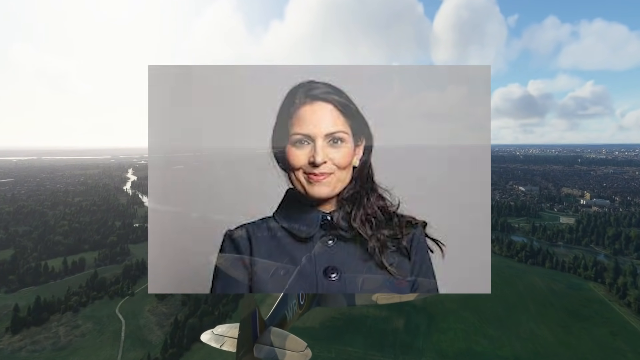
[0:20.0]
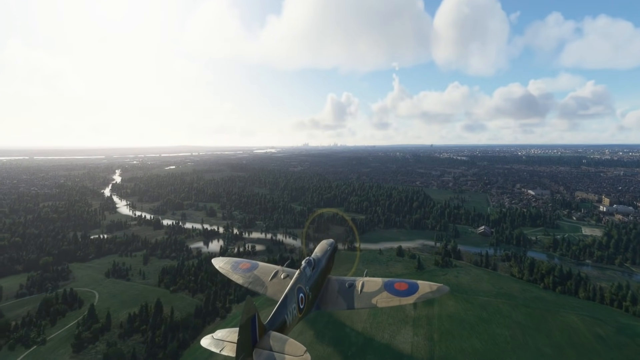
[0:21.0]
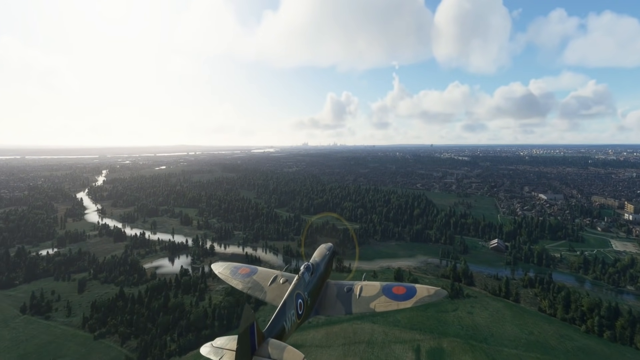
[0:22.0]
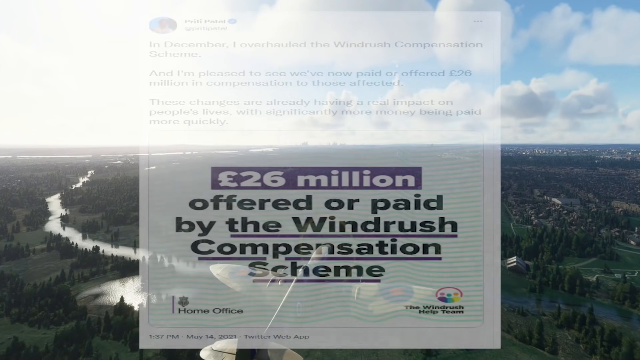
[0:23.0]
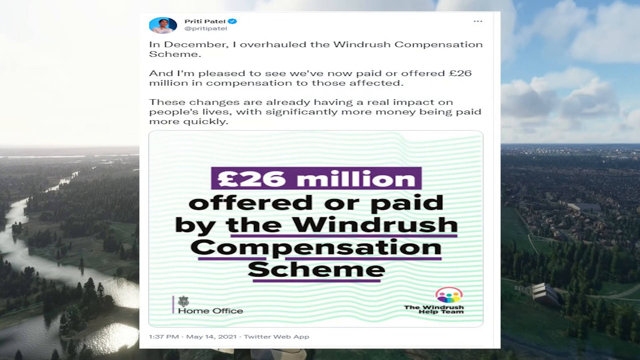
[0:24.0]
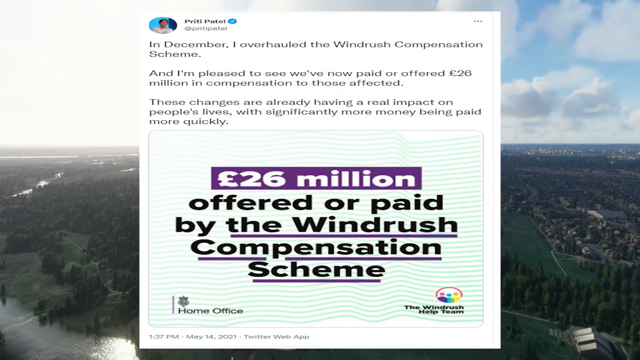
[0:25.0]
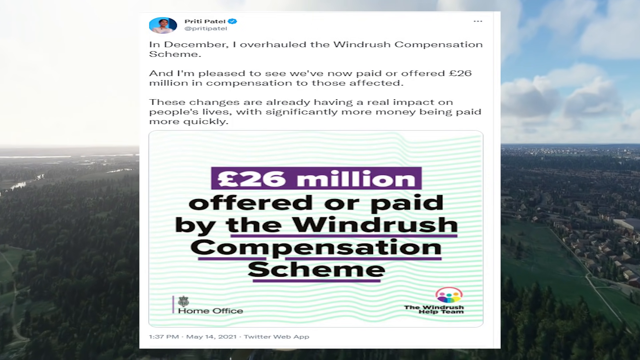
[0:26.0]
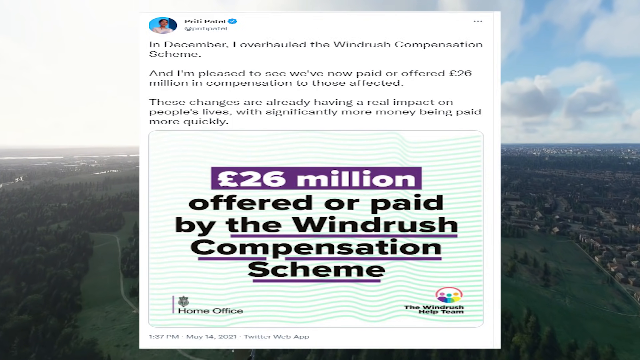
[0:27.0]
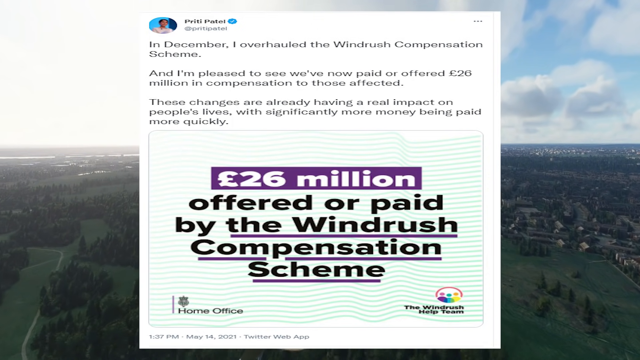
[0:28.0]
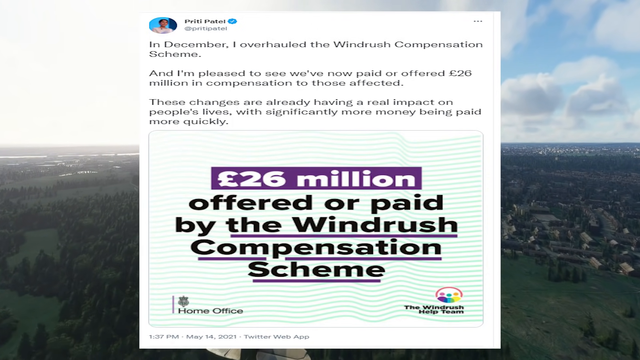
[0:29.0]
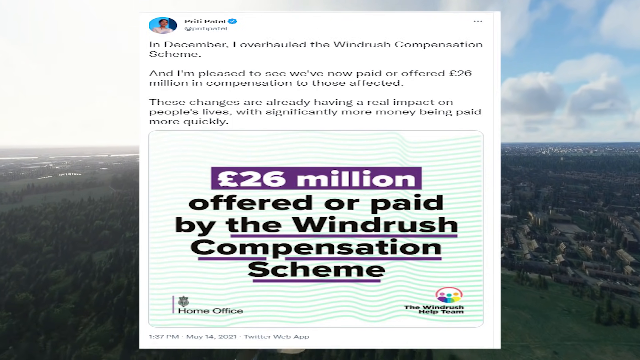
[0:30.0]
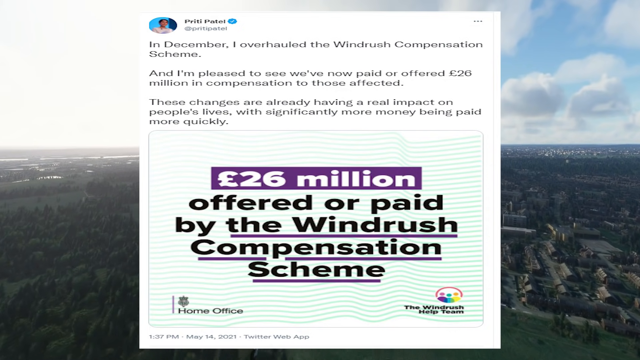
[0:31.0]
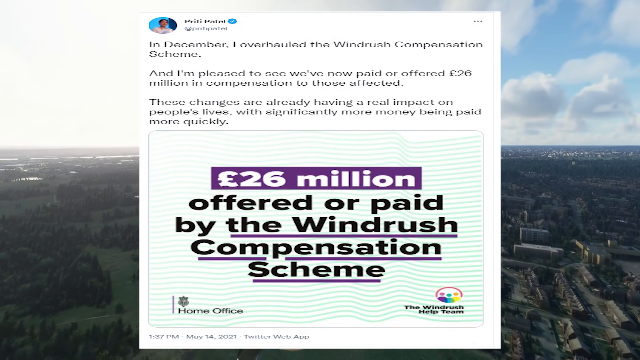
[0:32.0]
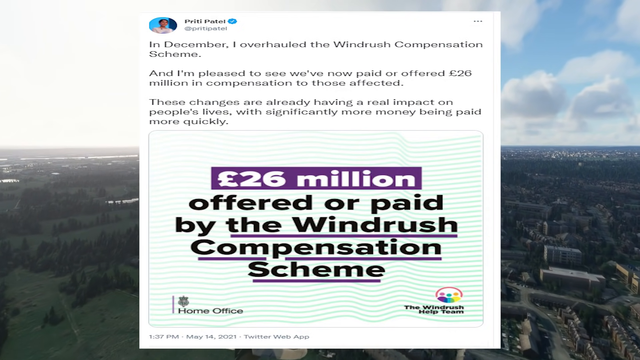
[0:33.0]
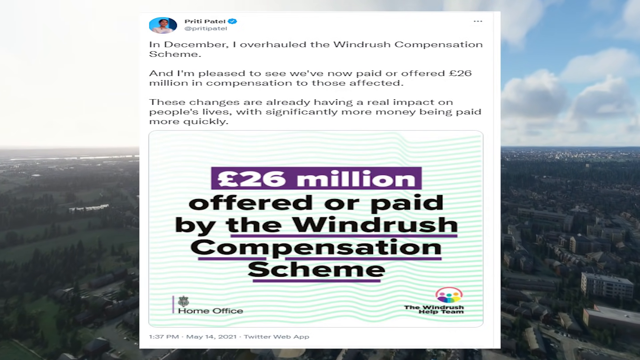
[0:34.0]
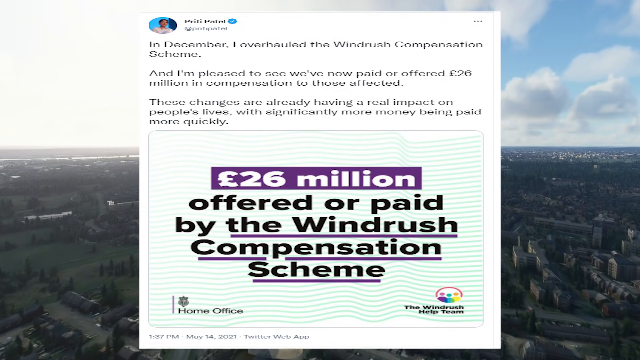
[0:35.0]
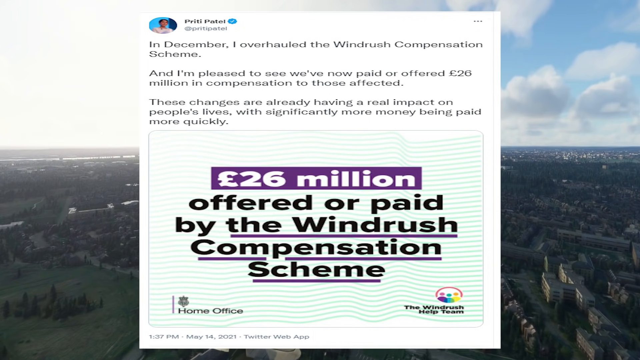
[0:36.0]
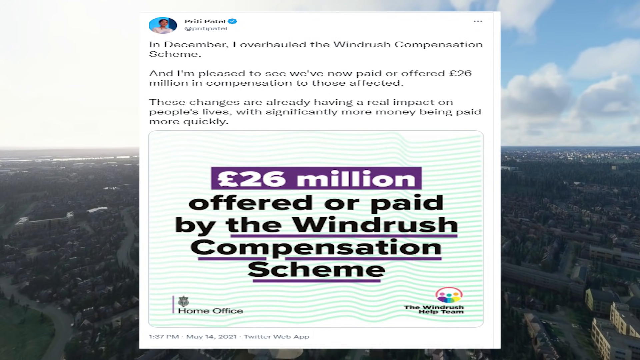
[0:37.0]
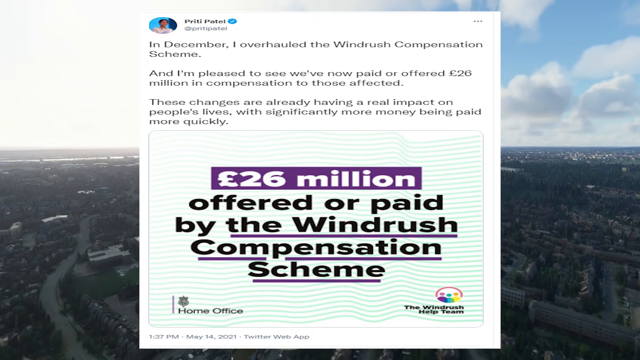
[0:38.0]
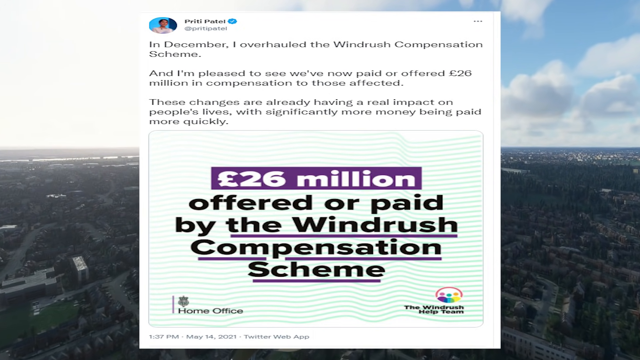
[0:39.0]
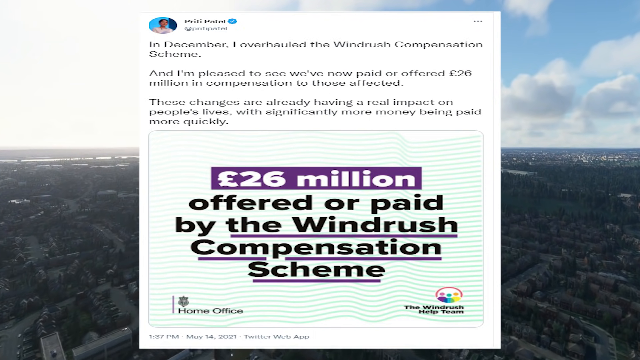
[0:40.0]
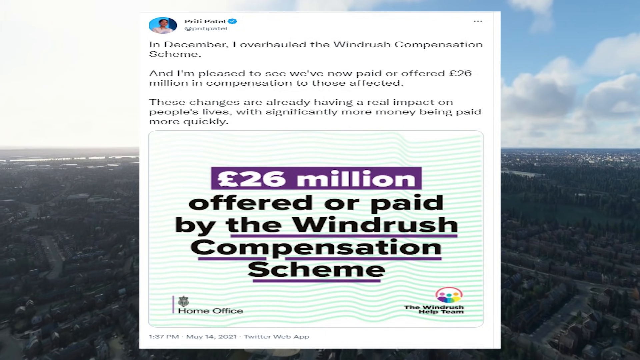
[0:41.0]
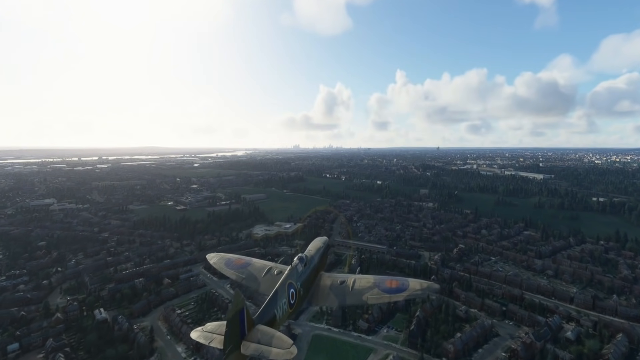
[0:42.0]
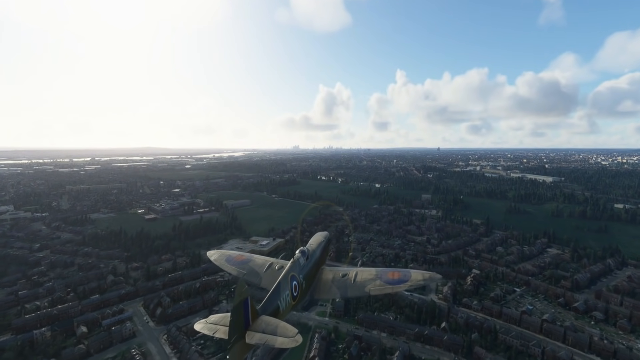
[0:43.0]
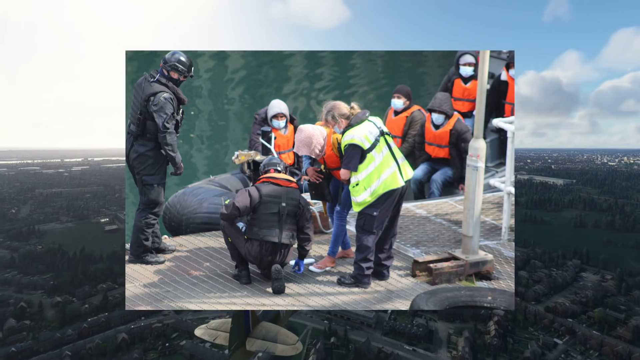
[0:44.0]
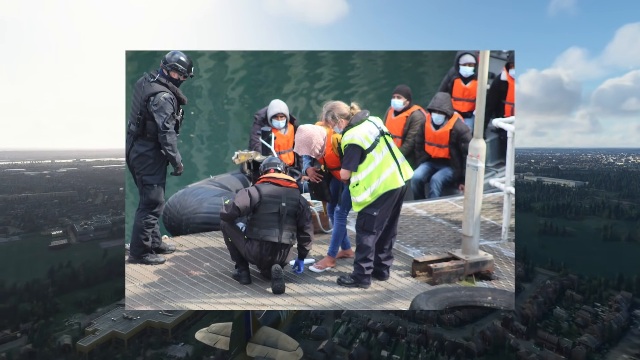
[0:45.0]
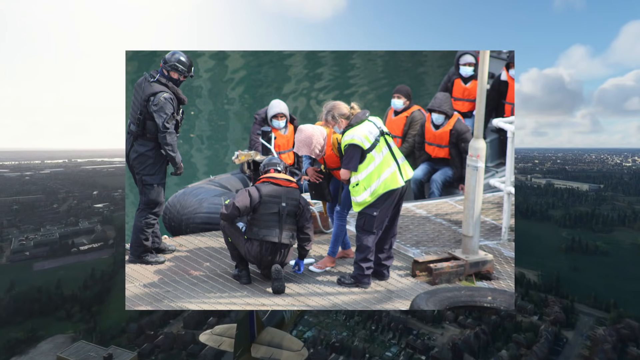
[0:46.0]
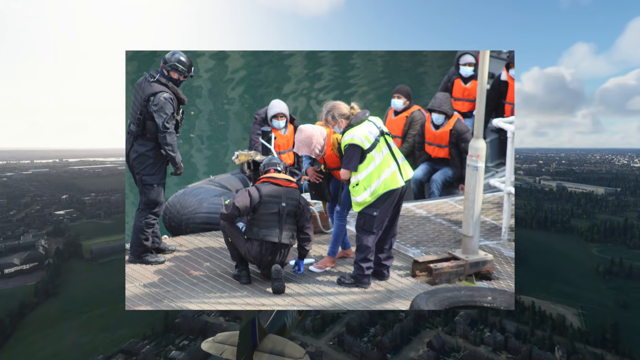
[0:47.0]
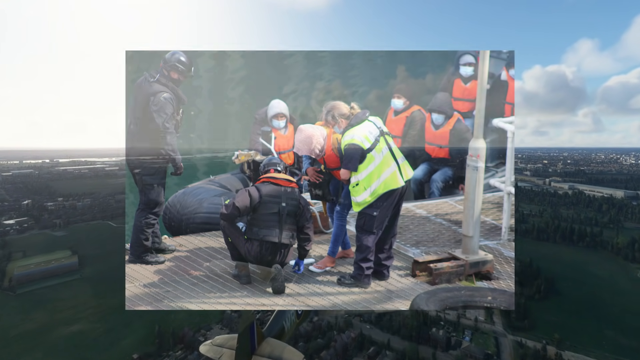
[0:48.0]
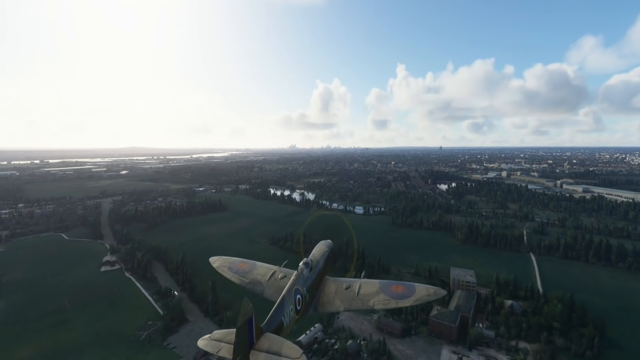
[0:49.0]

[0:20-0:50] An aerial view shows a crop duster type of plane from the top, its propeller visible, as it goes over open fields with trees. A pop-up appears that looks like it may be a Facebook post or a tweet; in the middle, in big letters, it says "26 million offered or paid by a Windrush compensation scheme," with a smaller write-up at the top of the page. The page stays on screen as the plane crosses the land. A few buildings are visible, and the sky is blue with some clouds, very cloudy on the left side. After the plane, a rescue appears: it looks like a person is being rescued from water, and they are on a dock with other people. Then a picture of a very well-dressed woman appears; she wears a beautiful jacket with very large buttons down the front, and her brown hair is pulled over to the side of one shoulder.